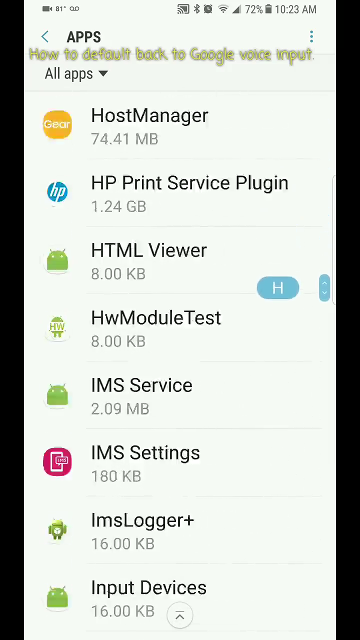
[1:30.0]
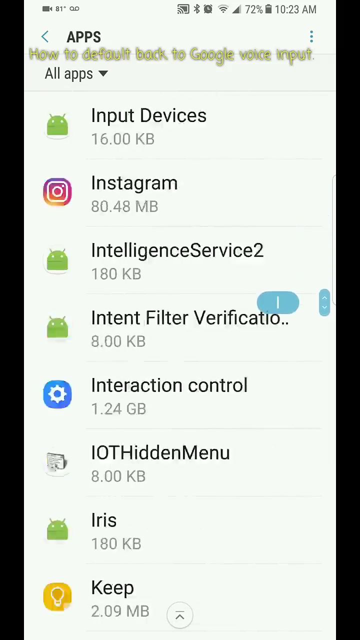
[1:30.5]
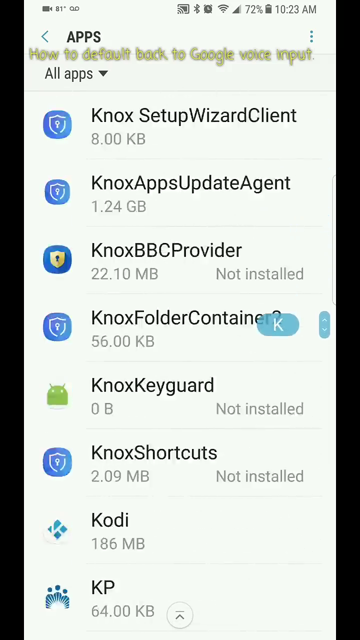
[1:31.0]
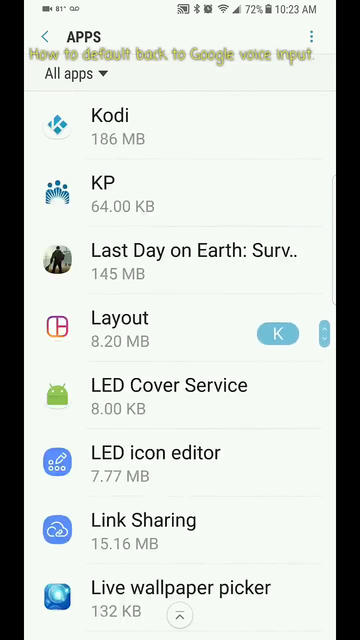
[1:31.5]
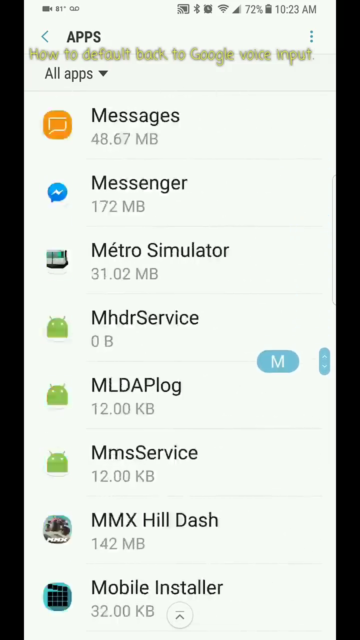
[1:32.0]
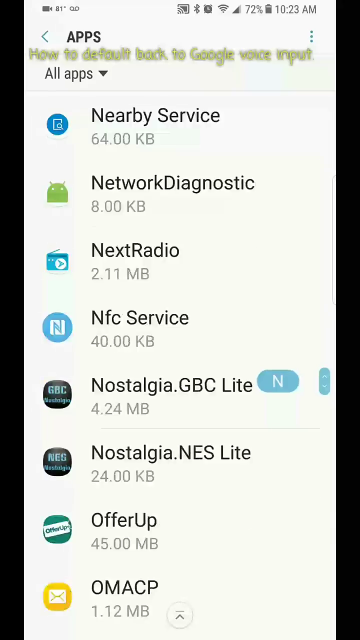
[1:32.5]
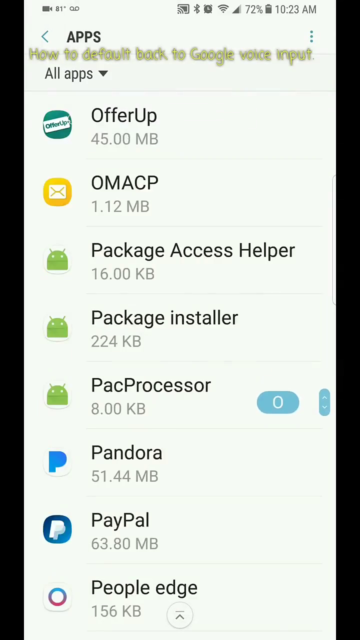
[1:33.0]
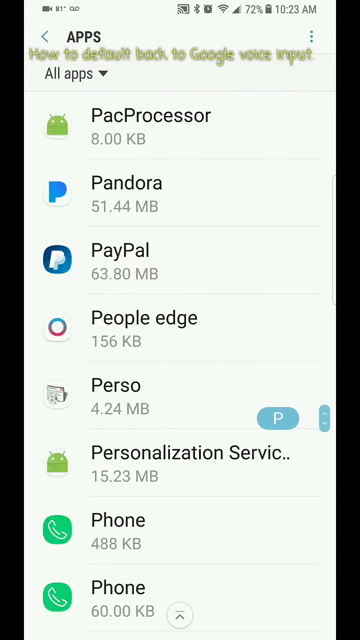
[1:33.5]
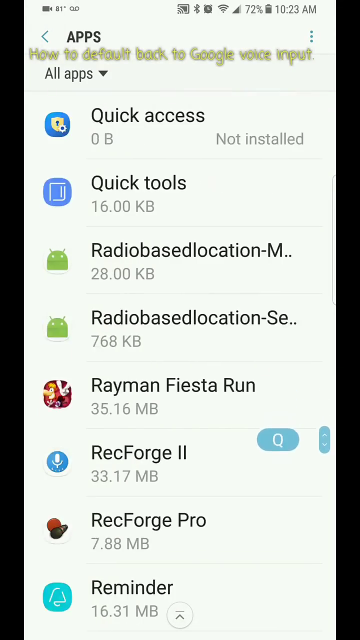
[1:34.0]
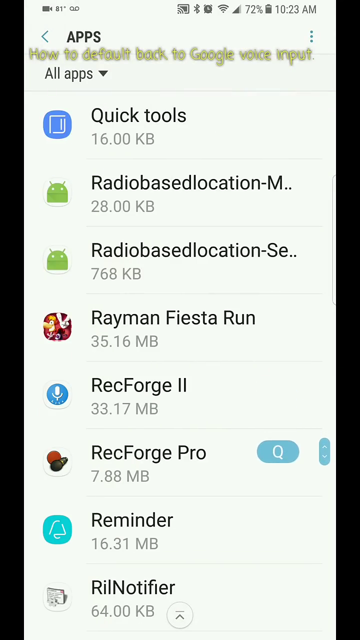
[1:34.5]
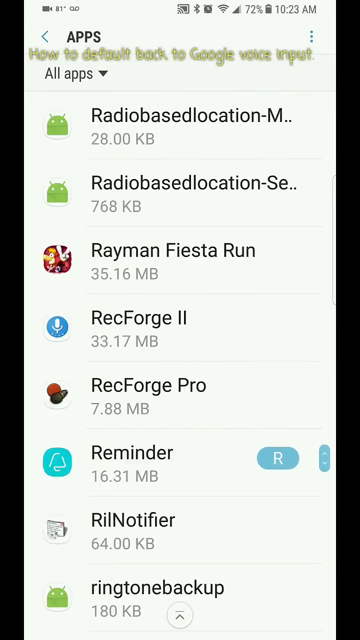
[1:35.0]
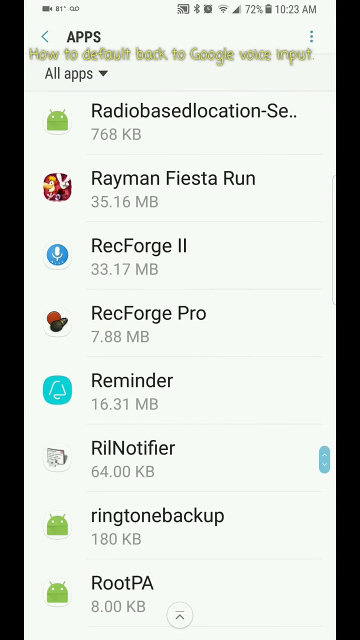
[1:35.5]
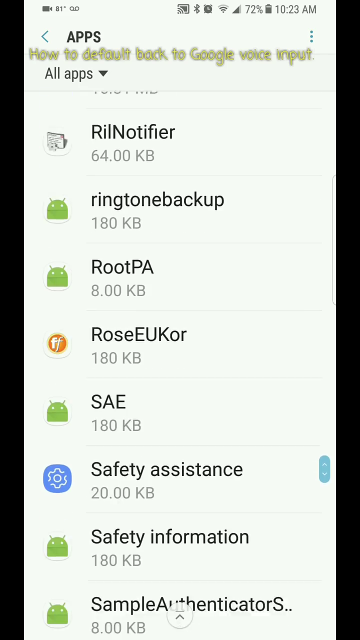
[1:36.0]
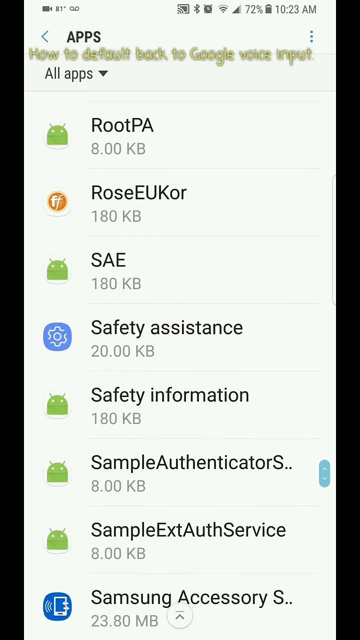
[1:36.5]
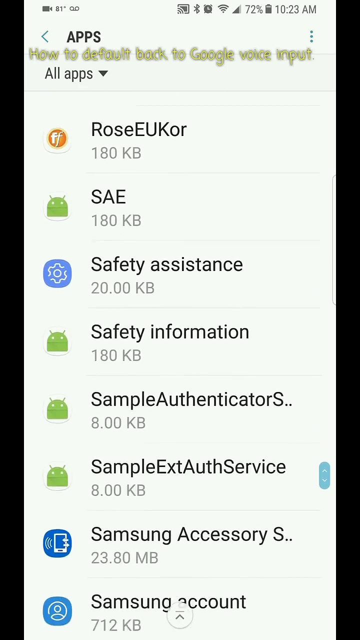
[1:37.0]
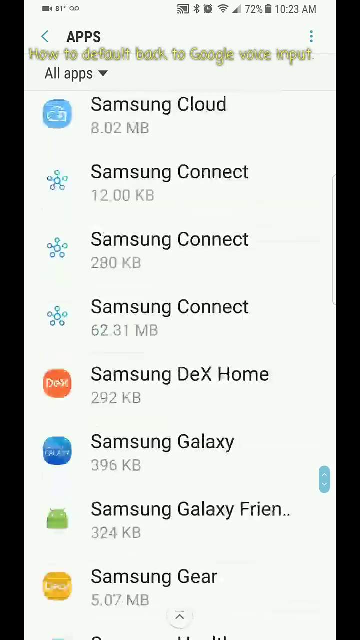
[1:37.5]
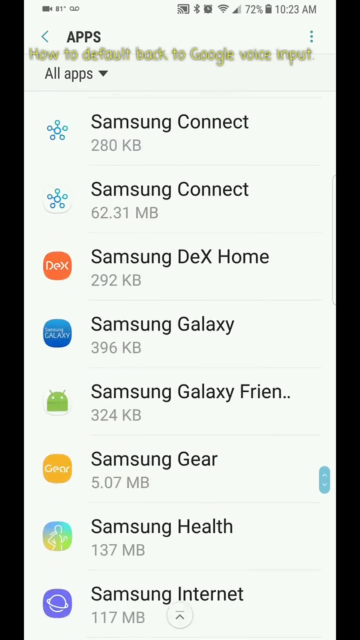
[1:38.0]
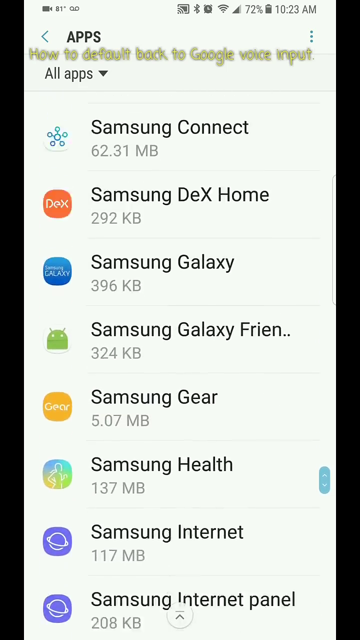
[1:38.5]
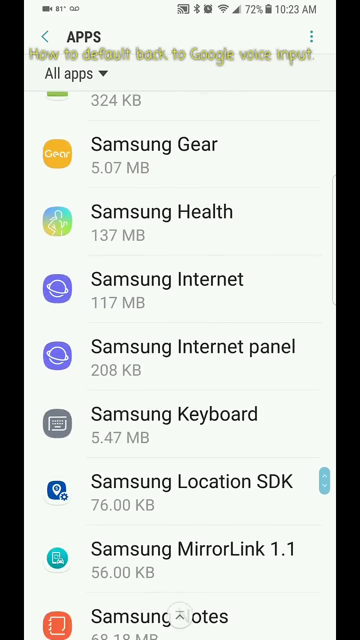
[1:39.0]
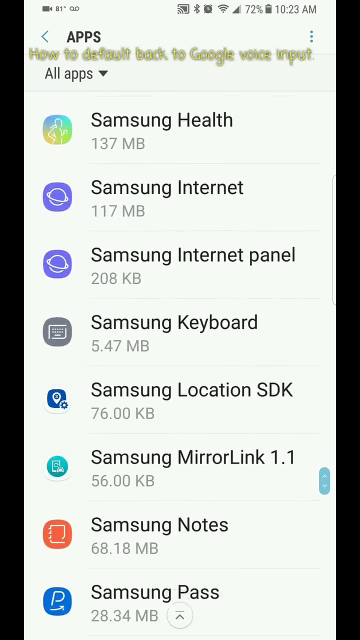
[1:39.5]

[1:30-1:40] The list scrolls by very quickly, with the scroller showing a white letter inside a blue bubble. It goes down to the R's, then slows at the S's, as if looking for something, possibly Samsung. The list has a white background with black bars on both sides. Each entry has a colored logo on the left, the app name in bold, and the size in gray underneath. IMS settings has a pink circle with a white square containing a hand. HTML viewer has what looks like an Android robot with antennas and shows "8.00 KB".